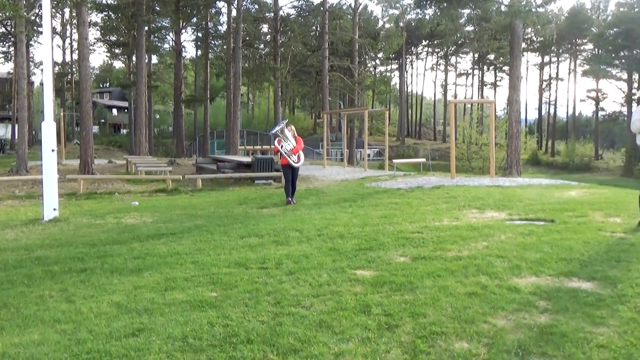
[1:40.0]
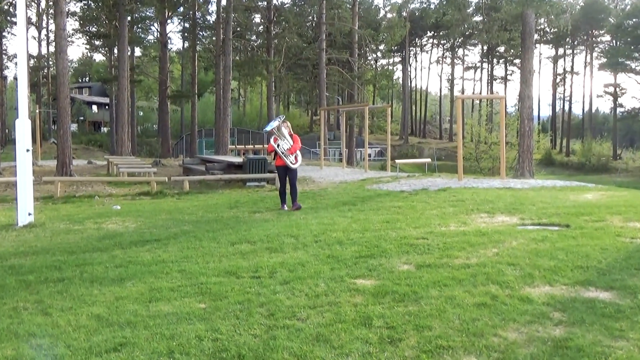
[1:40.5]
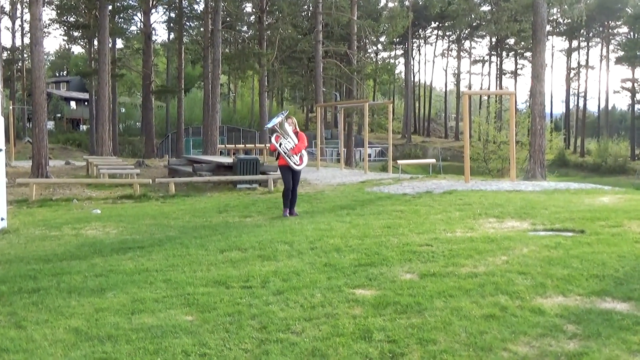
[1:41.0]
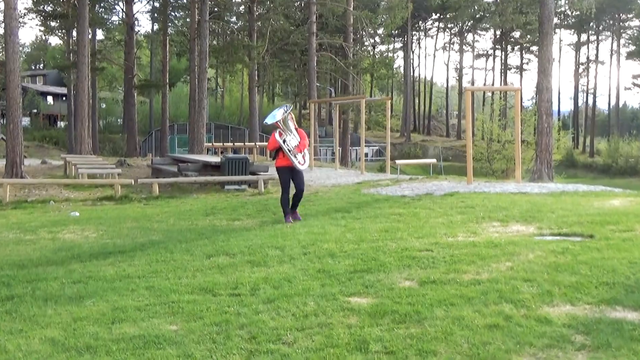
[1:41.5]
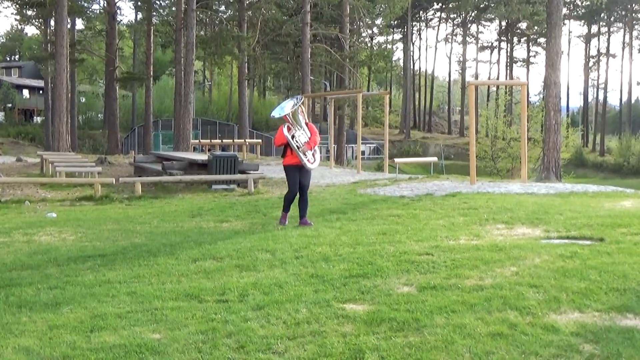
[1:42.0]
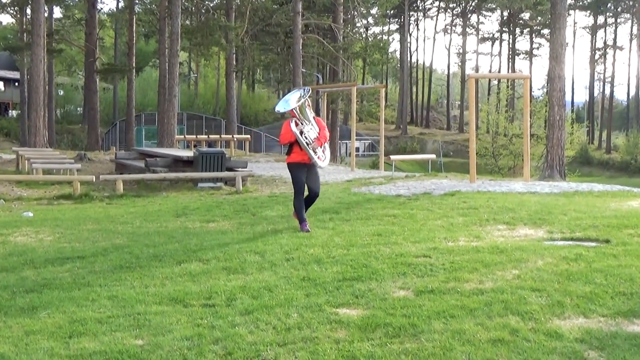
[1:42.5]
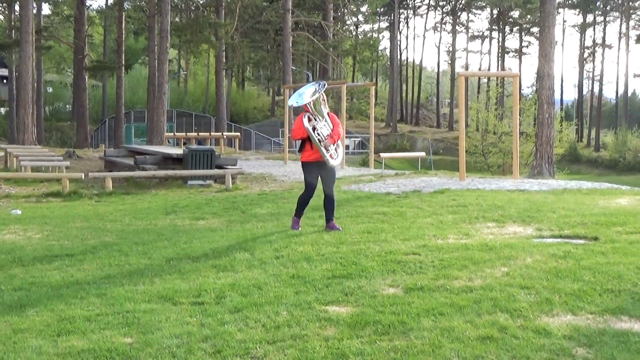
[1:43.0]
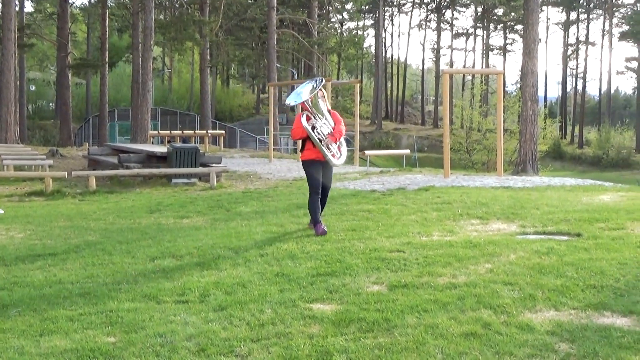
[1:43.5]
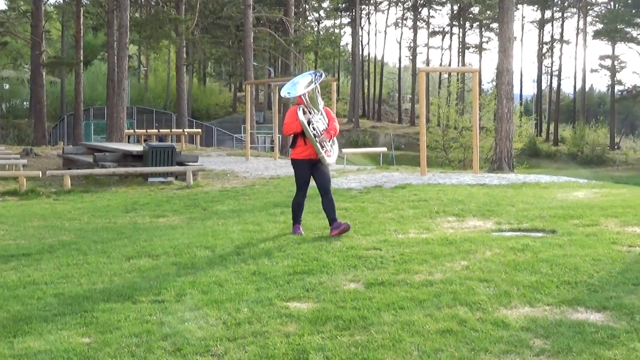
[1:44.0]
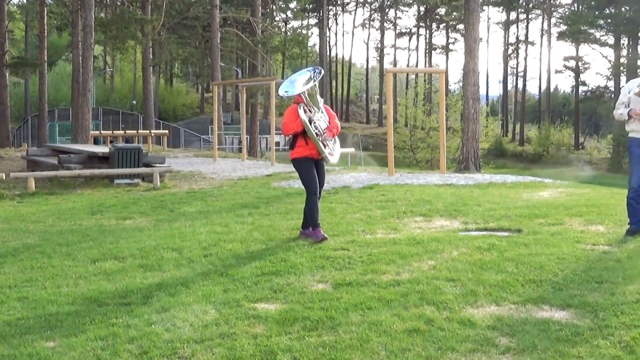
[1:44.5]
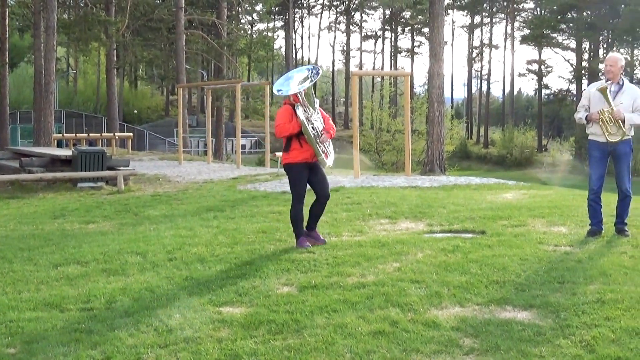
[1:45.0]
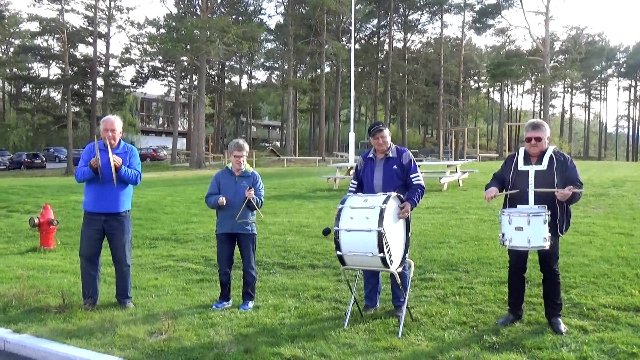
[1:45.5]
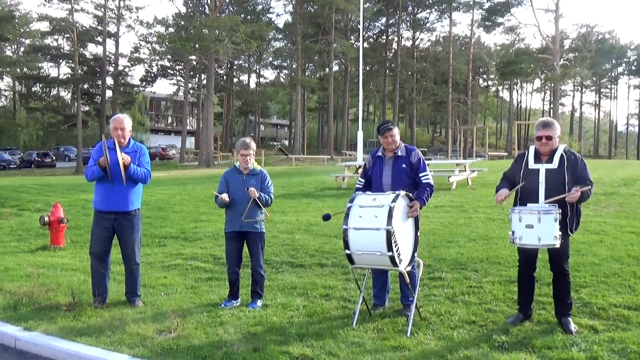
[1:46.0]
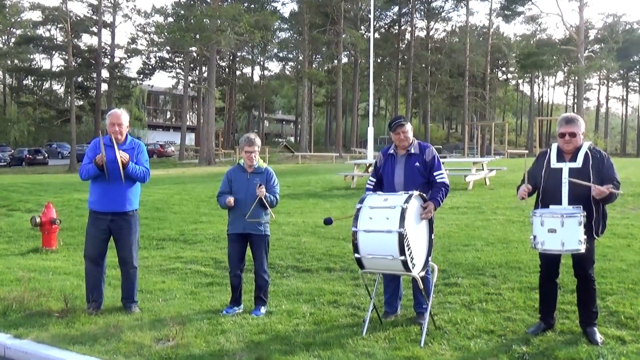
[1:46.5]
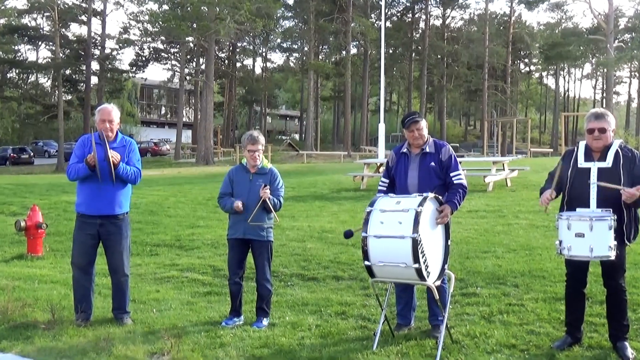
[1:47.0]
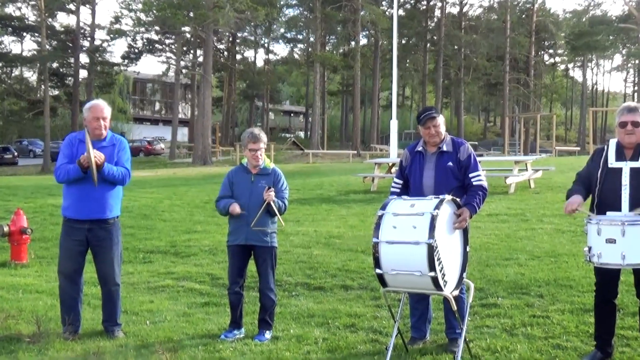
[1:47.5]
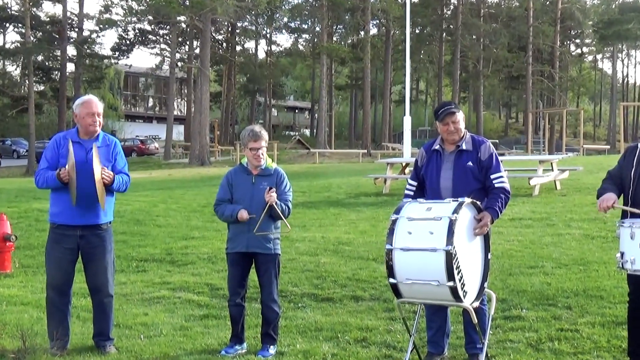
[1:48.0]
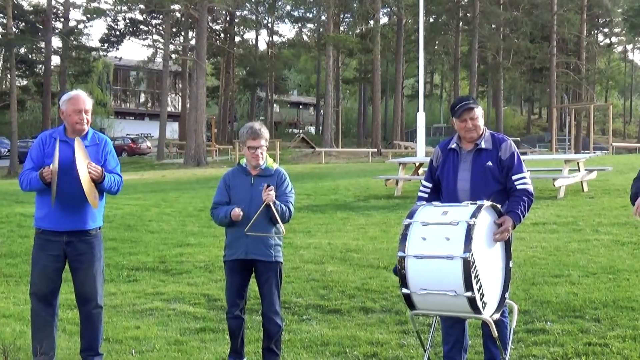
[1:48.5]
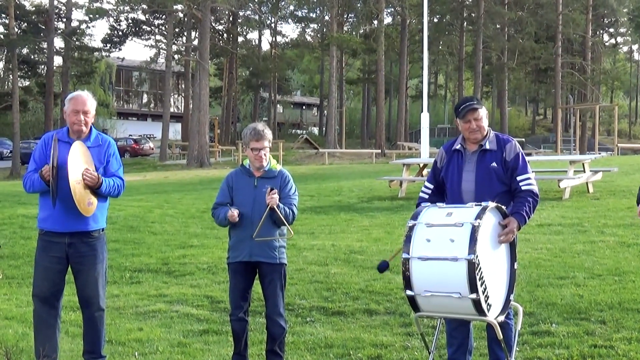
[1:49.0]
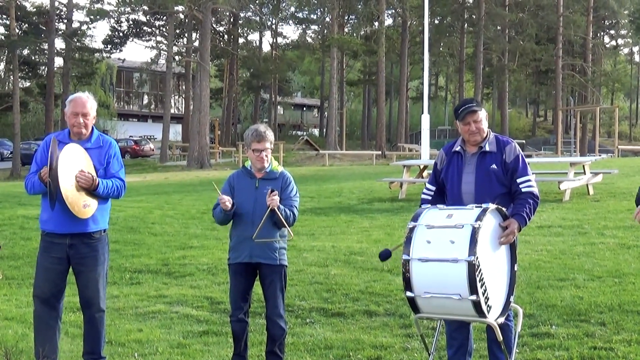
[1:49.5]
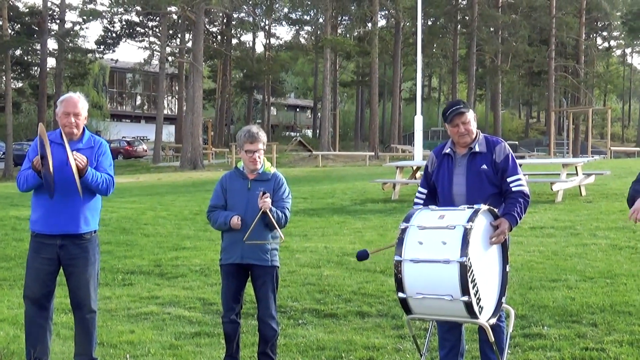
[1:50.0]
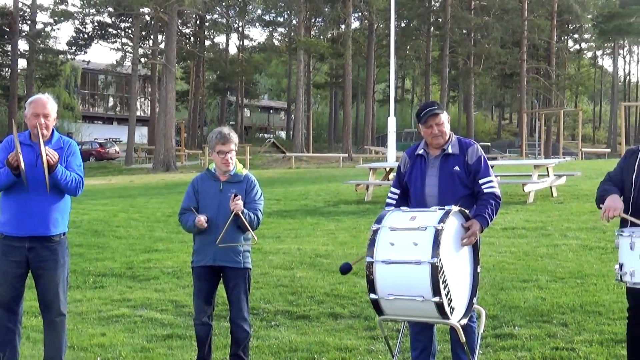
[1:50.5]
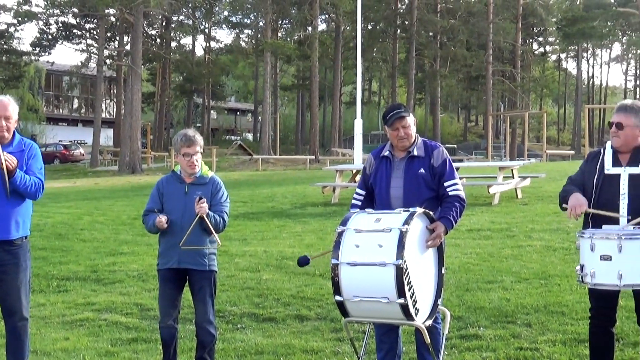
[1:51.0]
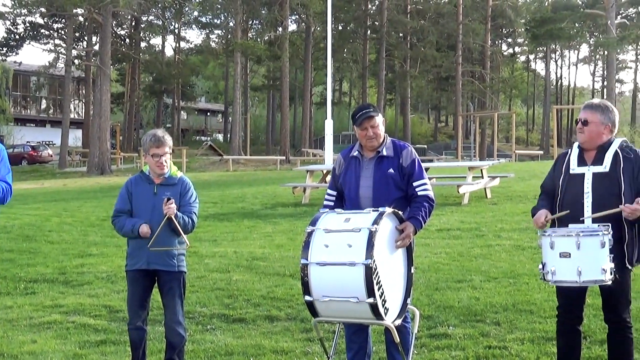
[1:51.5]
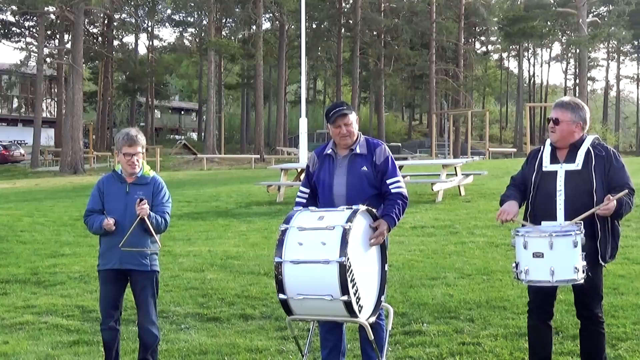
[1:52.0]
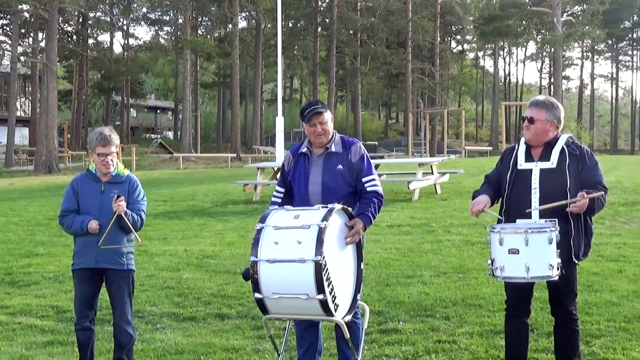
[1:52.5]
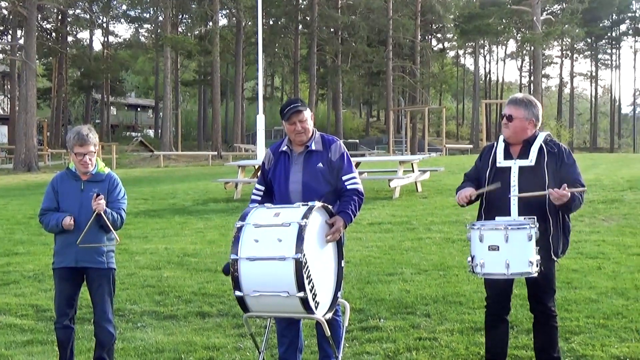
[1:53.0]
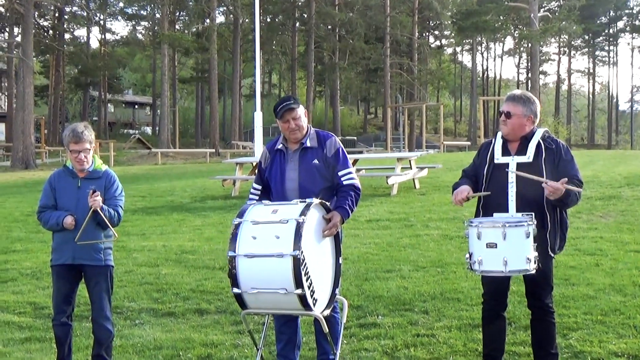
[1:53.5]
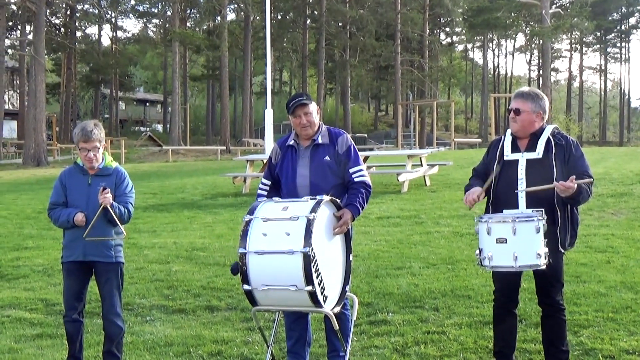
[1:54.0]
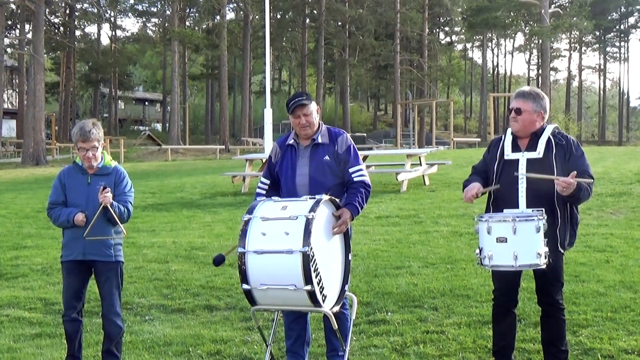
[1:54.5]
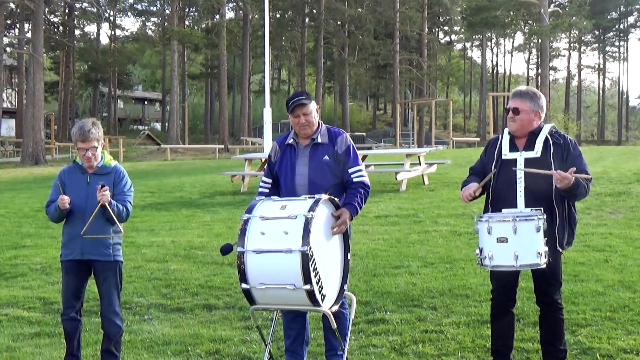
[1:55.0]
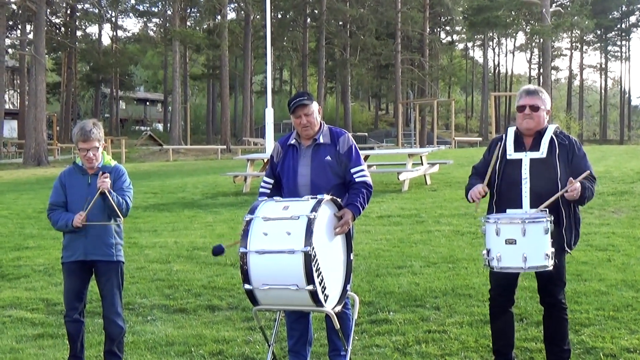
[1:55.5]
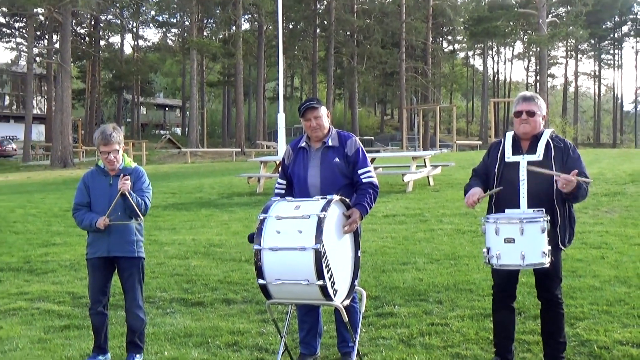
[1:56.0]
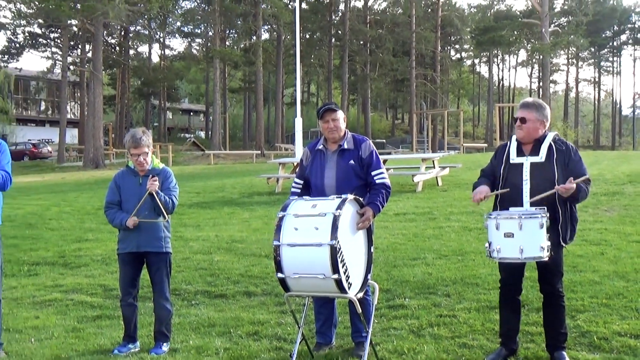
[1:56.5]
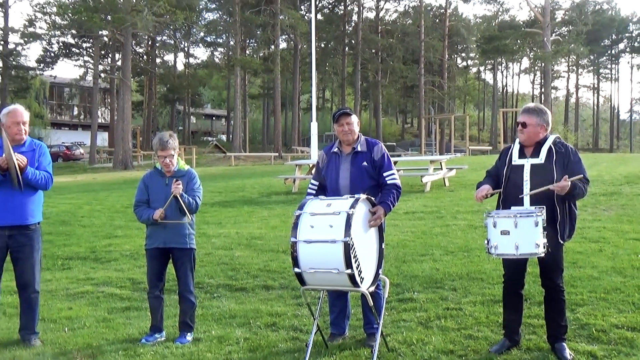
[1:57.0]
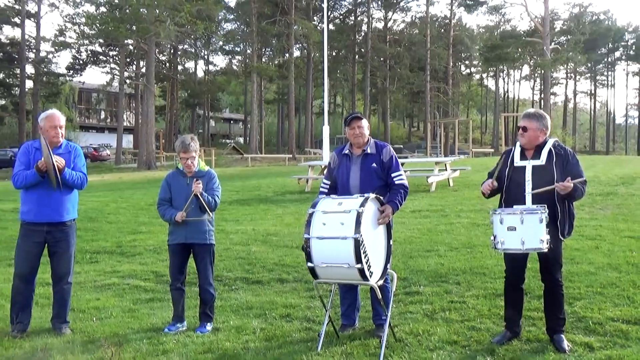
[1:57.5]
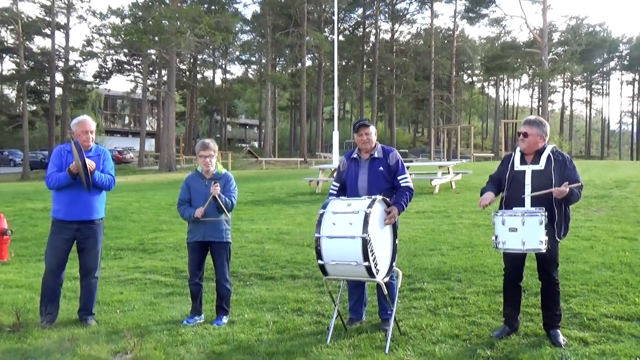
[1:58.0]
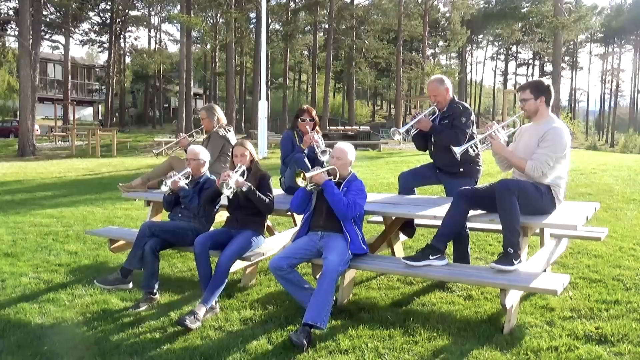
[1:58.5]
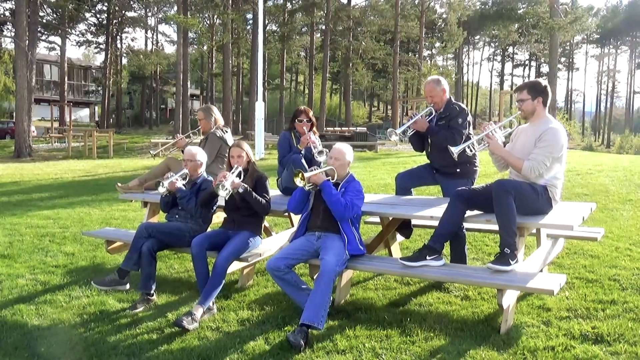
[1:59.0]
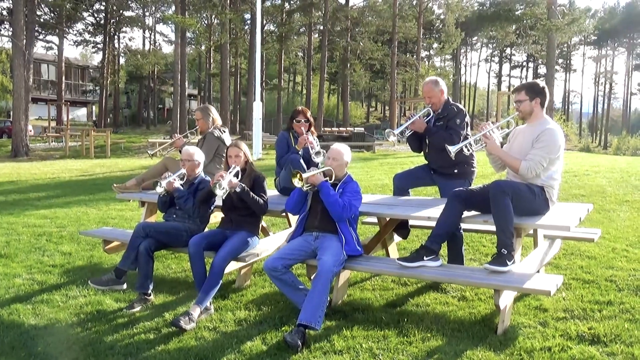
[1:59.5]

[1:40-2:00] A woman in a red long-sleeved shirt stands in a grassy field playing a large brass instrument, potentially a baritone, with large pine trees in the background. The video zooms in on the woman as she walks forward, and a man with a trumpet enters the frame. The video cuts to four people playing percussion instruments: the man on the left has a pair of cymbals, the person to their right has a triangle, the next person has a large white bass drum, and the person at the far right has a snare drum strapped to their chest. They all play their instruments and bang on their drums. The video pans to the left, then to the right, and then zooms out. It then cuts to a group of people sitting on a wooden park bench, all playing brass instruments, which are trumpets.